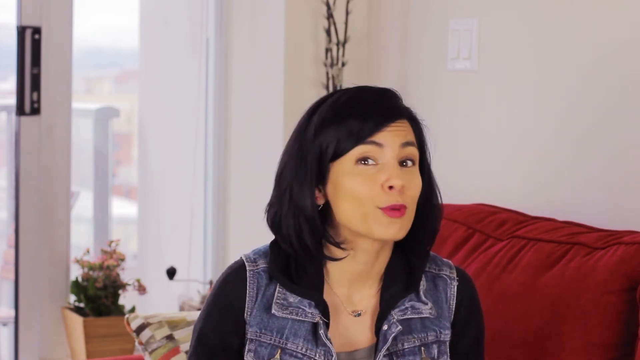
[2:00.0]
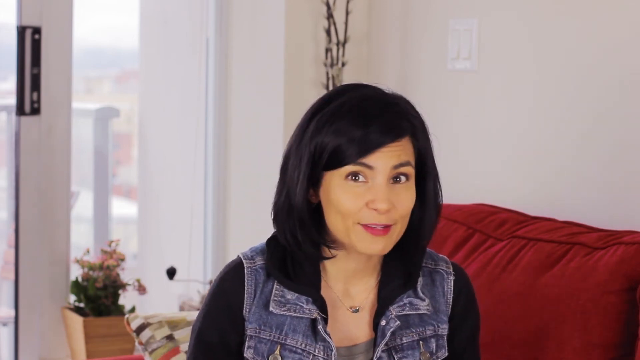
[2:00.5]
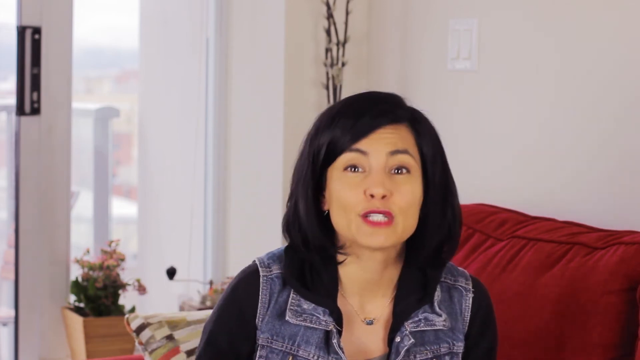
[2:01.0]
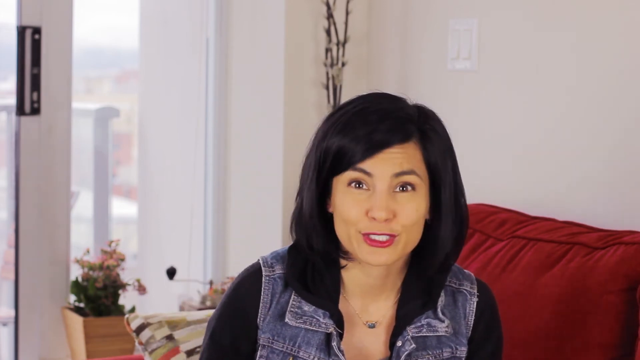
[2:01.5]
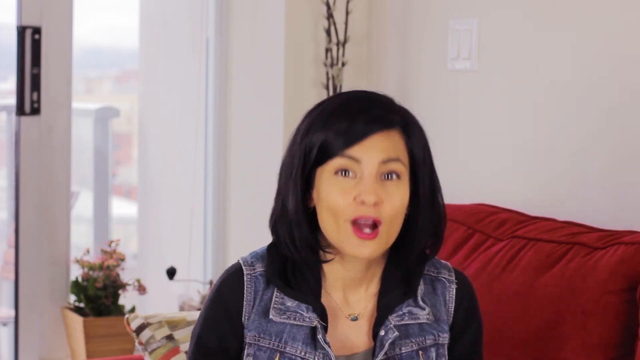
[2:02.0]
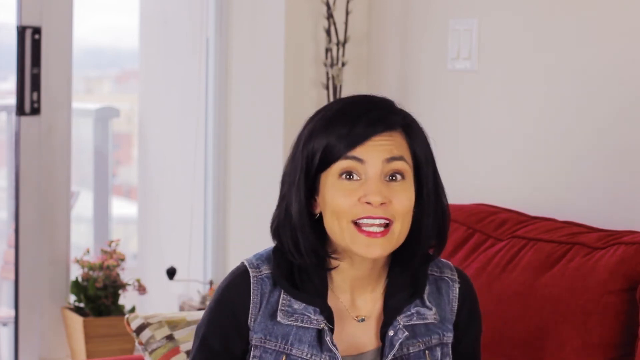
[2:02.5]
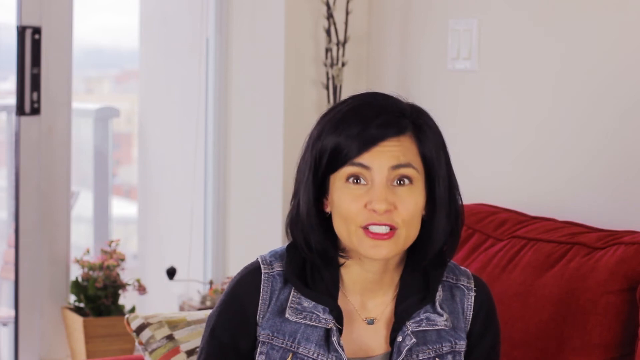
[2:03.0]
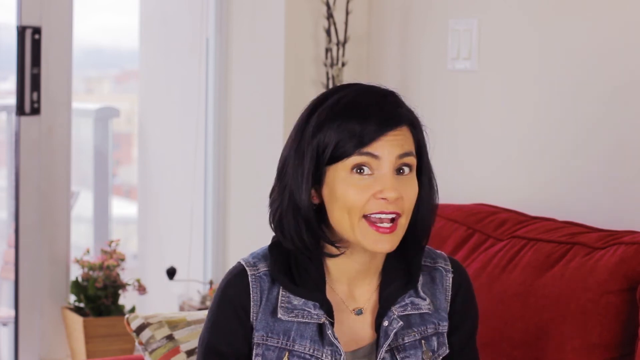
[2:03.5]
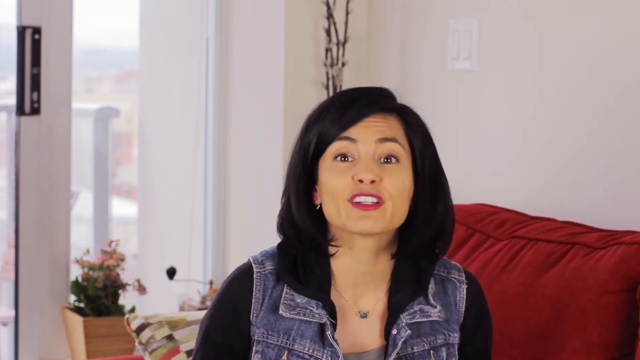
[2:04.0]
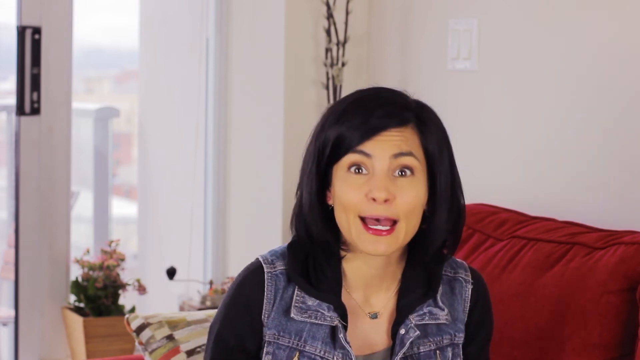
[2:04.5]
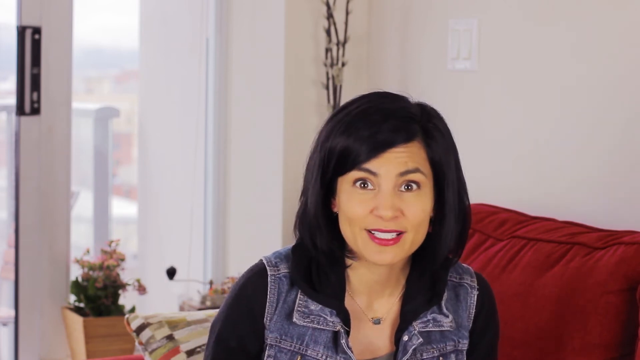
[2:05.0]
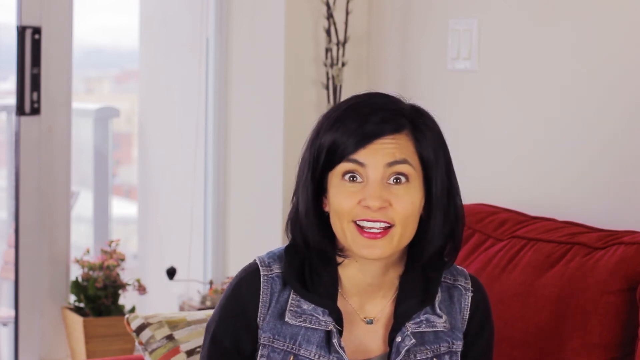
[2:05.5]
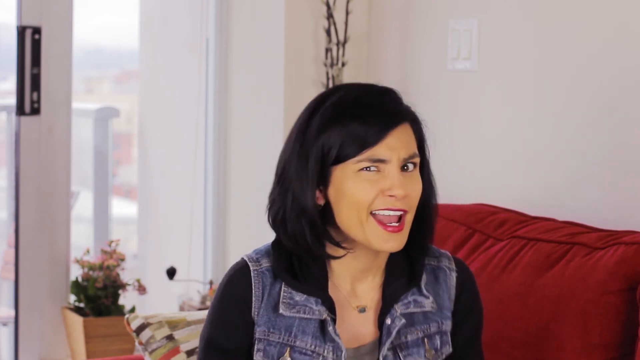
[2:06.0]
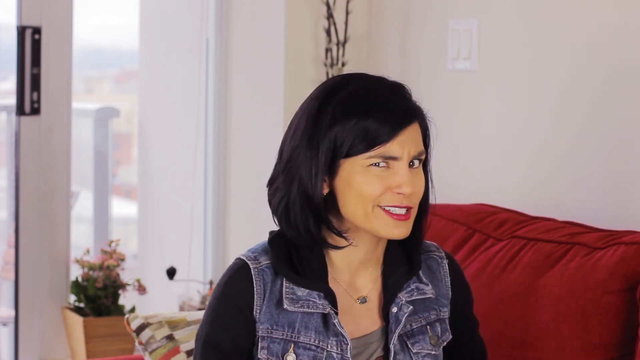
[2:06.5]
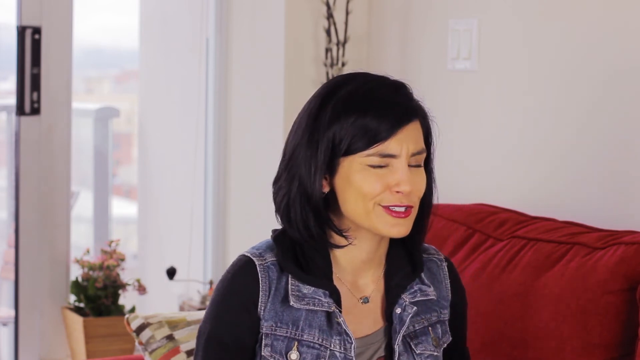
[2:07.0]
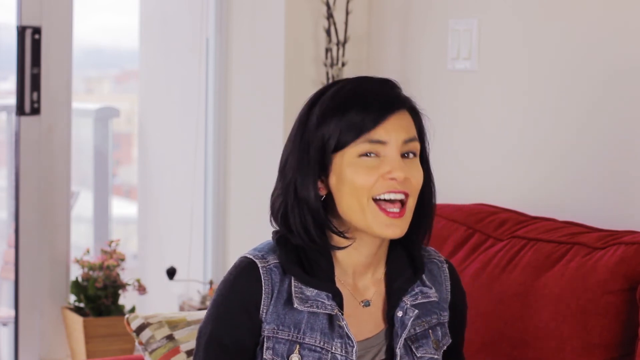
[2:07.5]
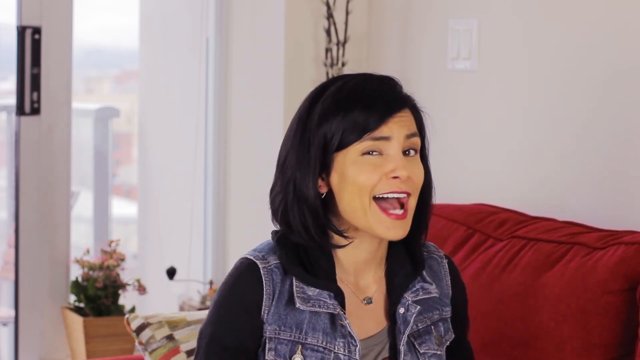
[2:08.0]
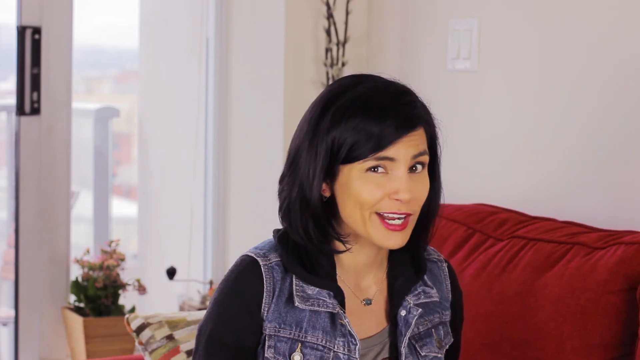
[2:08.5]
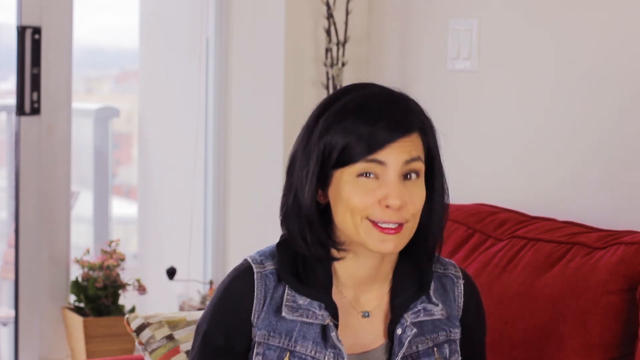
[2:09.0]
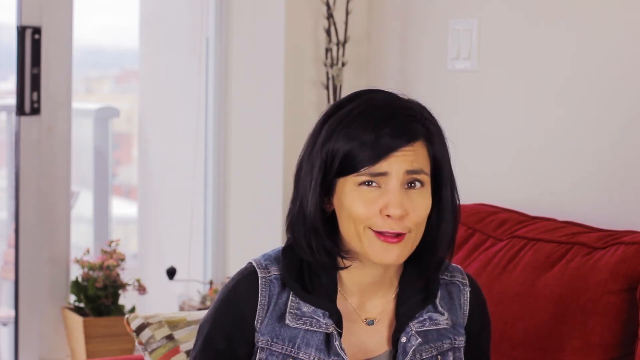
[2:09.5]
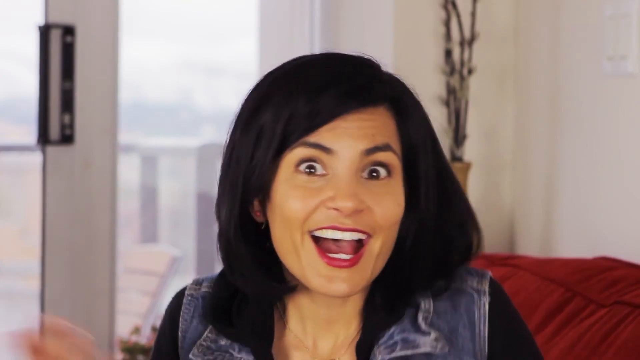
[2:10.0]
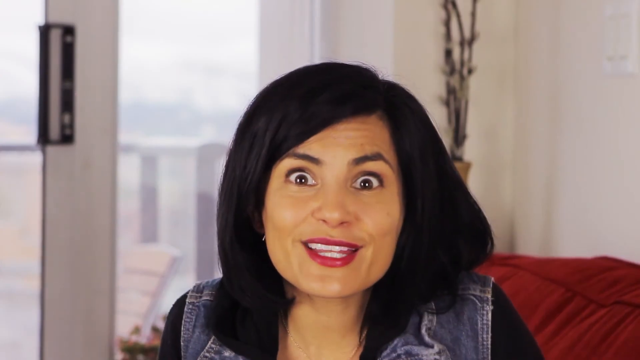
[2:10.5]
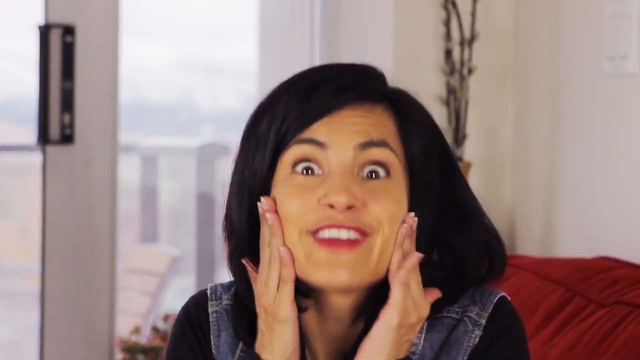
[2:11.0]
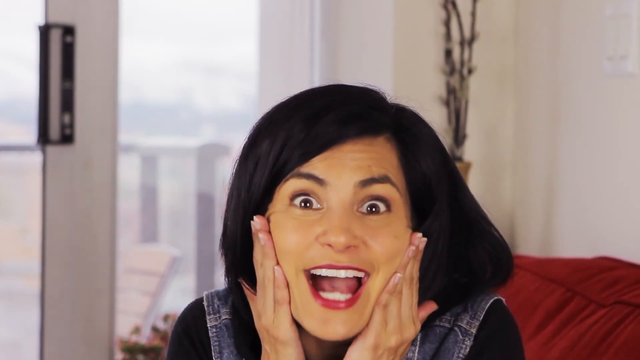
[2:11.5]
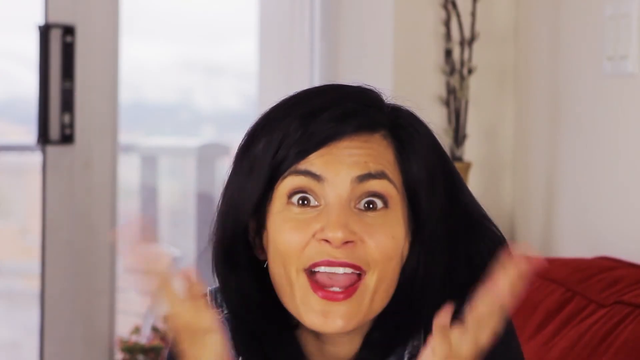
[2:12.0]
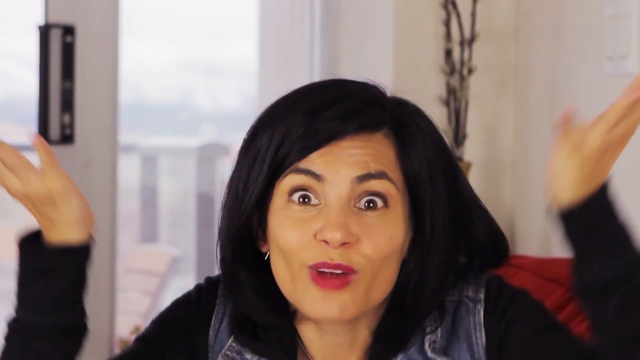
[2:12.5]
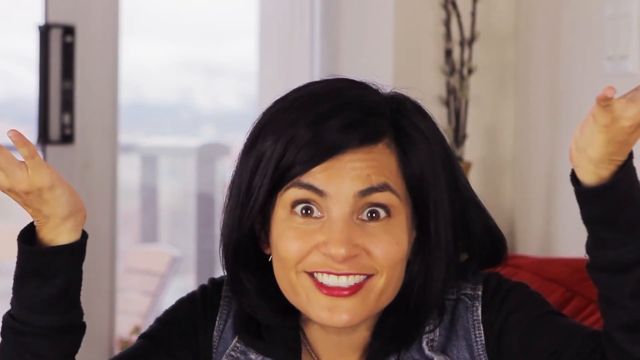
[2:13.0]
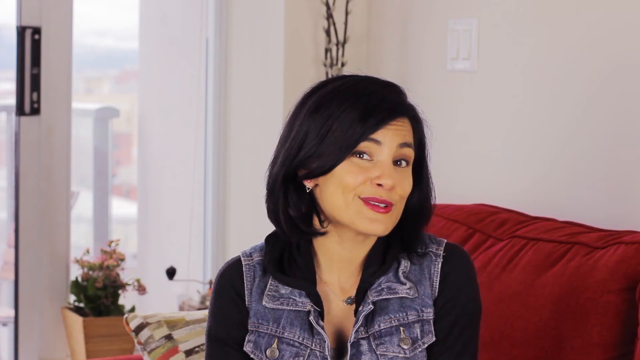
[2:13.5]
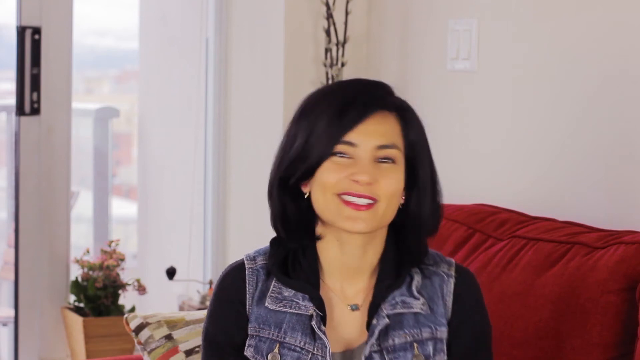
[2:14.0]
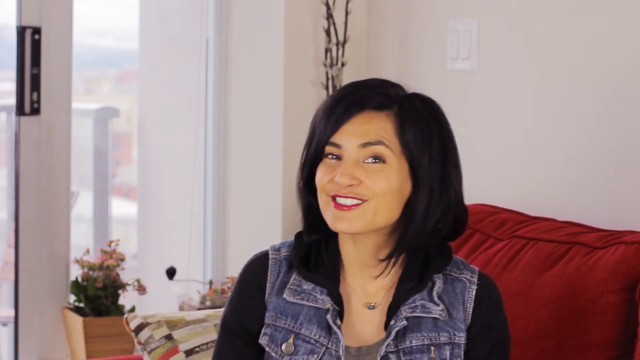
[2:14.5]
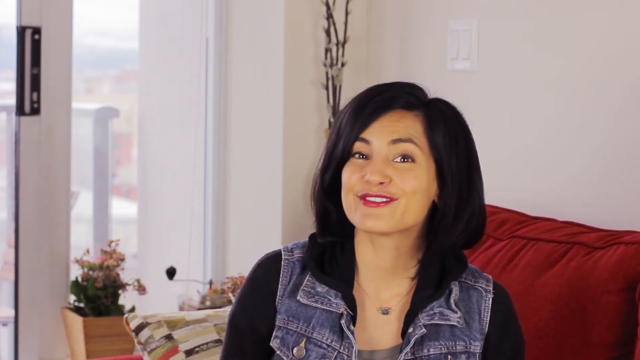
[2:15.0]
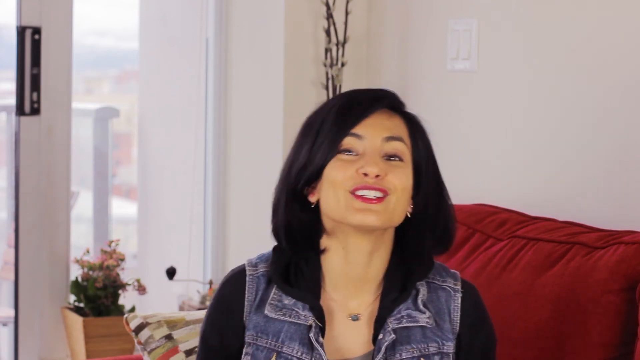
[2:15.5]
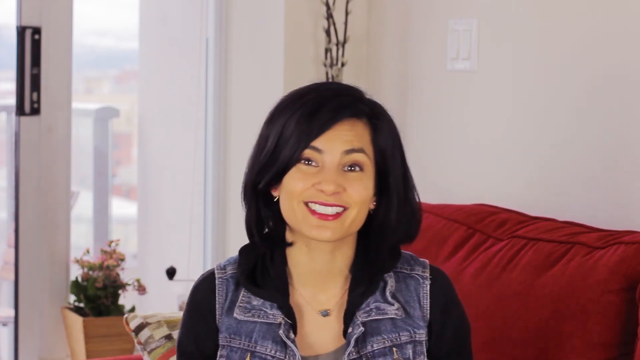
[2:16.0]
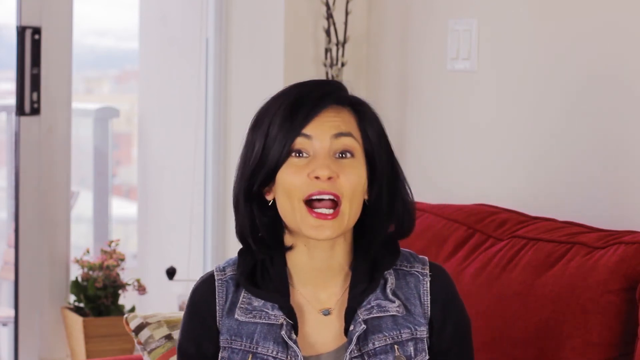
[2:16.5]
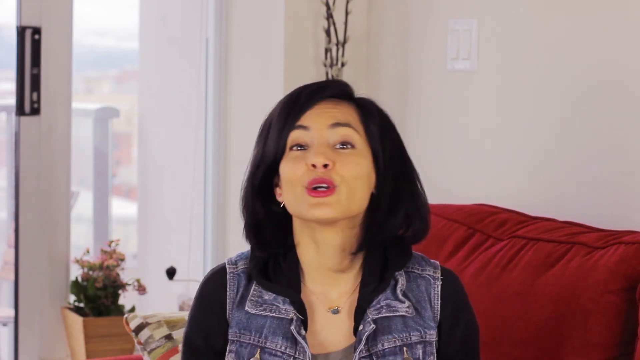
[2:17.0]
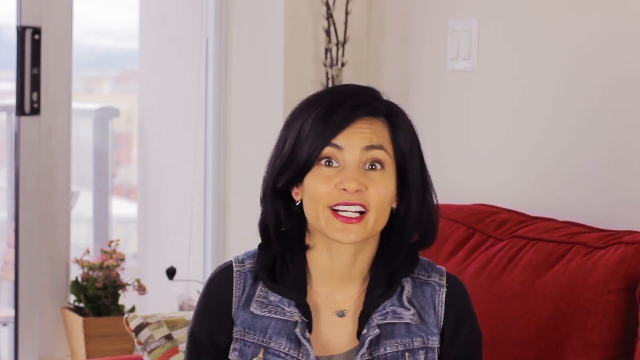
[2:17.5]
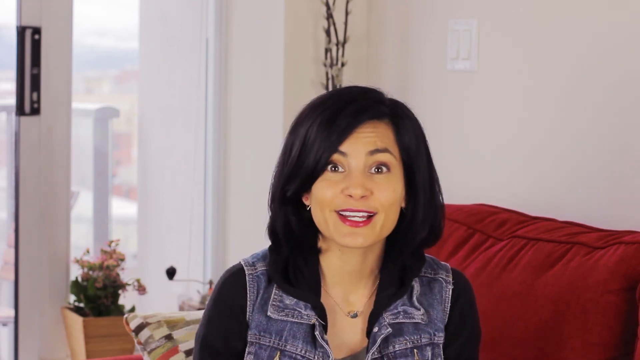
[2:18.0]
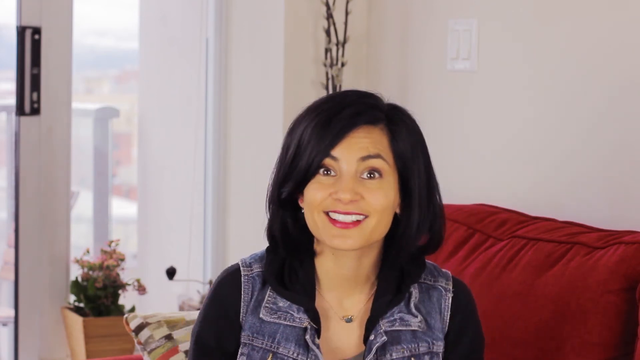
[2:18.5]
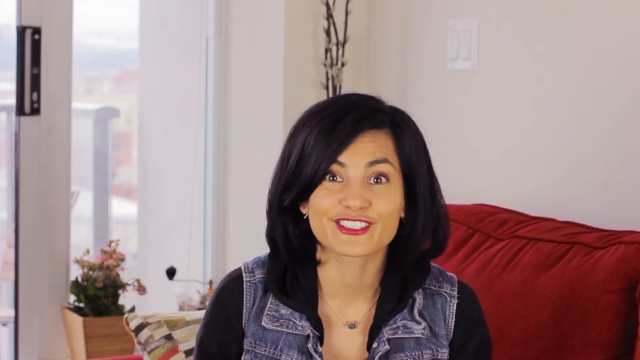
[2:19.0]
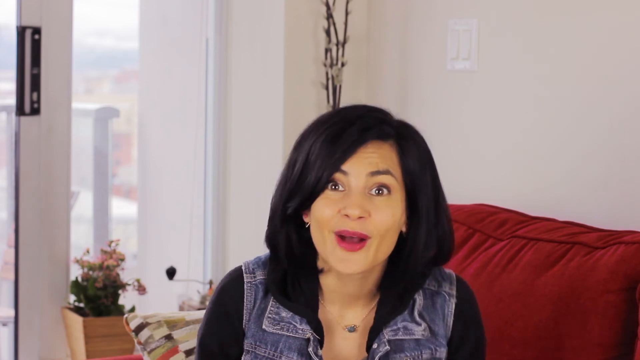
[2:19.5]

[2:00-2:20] The woman is back on the red couch, making body movements as she addresses what looks like one issue and another issue, acne. She looks at the camera making facial expressions, her right eye slightly closed. A closer shot of her face shows her putting both hands on her cheeks, smiling, opening her eyes wide, smiling again and lifting her hands. A wider view shows her sitting on the couch, smiling again, then saying thank you and making heart gestures. What looks like plugs or an outlet is visible on a wall in the background.